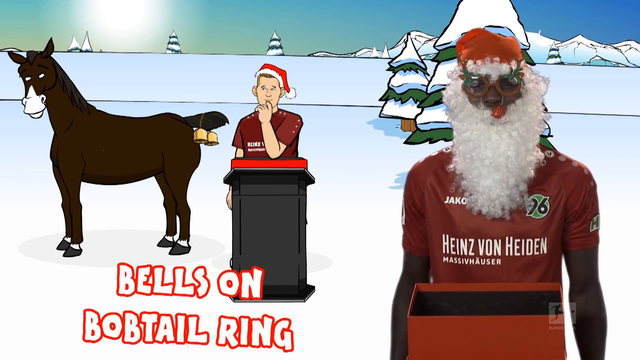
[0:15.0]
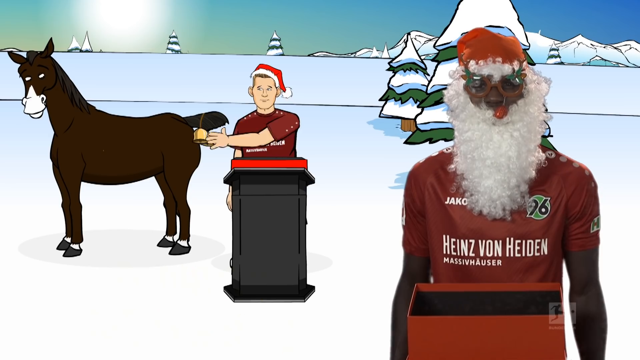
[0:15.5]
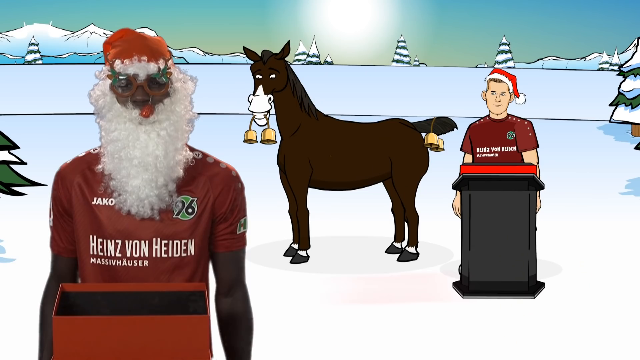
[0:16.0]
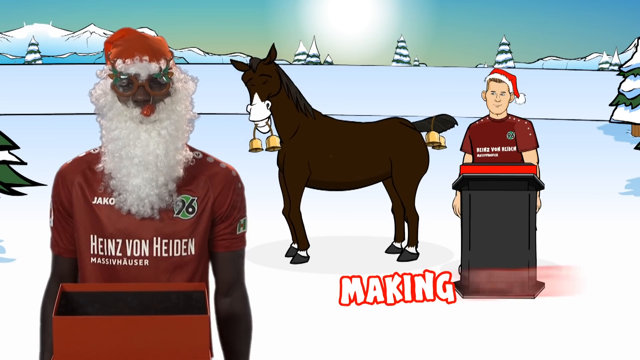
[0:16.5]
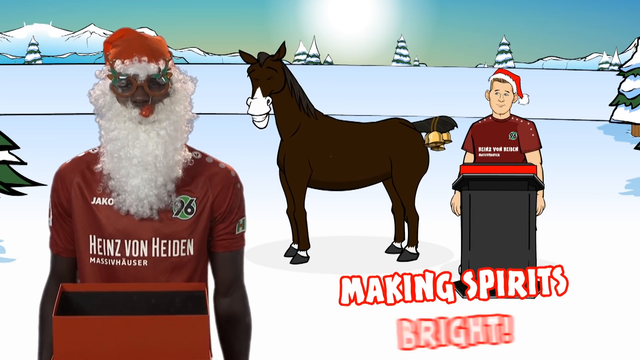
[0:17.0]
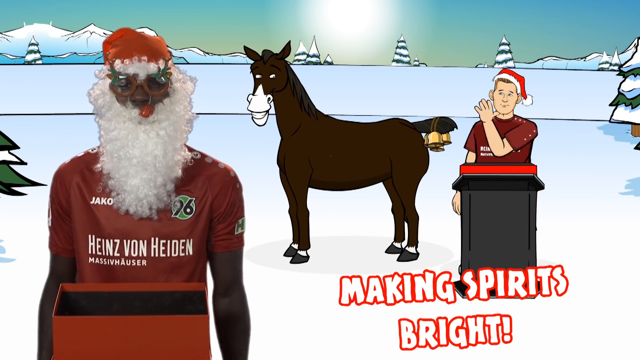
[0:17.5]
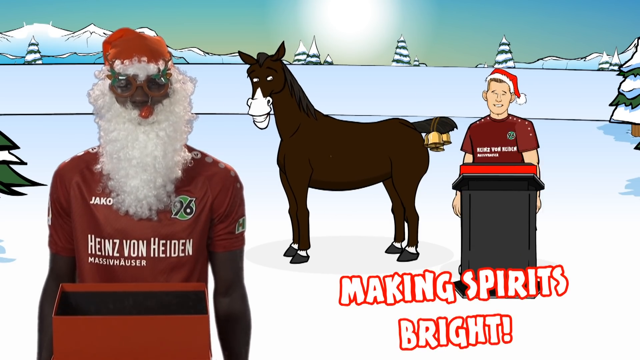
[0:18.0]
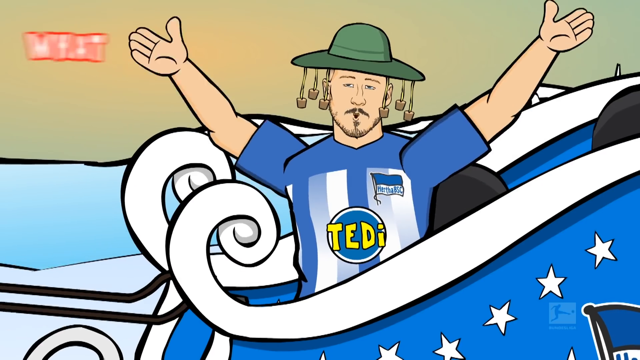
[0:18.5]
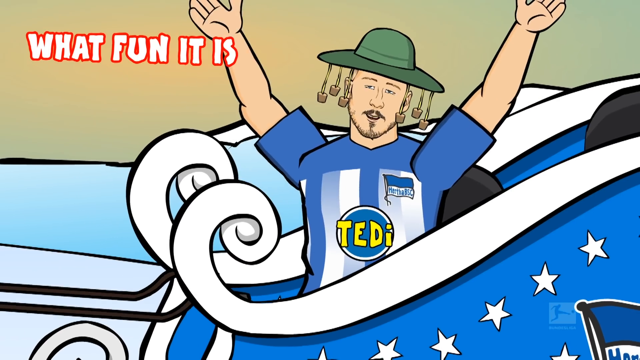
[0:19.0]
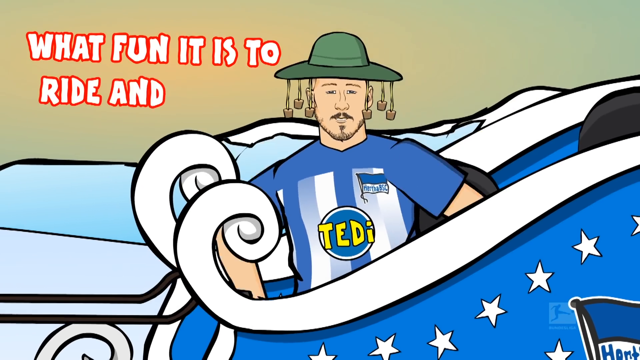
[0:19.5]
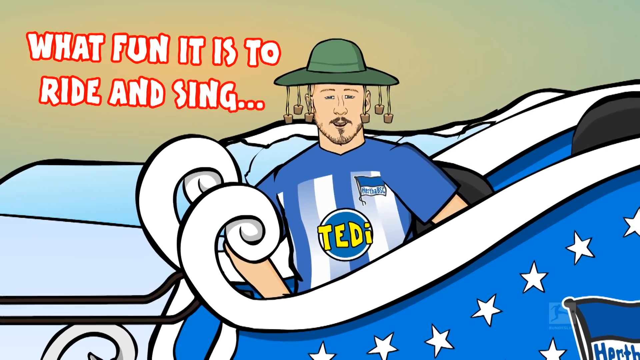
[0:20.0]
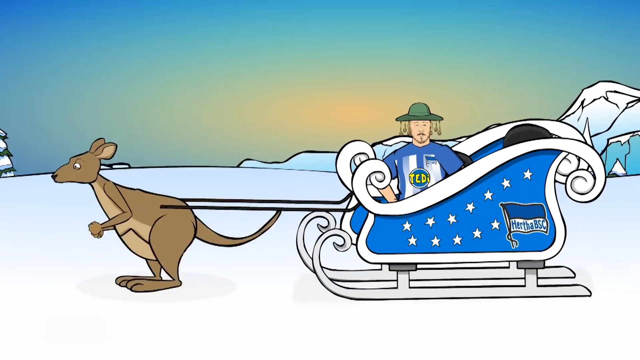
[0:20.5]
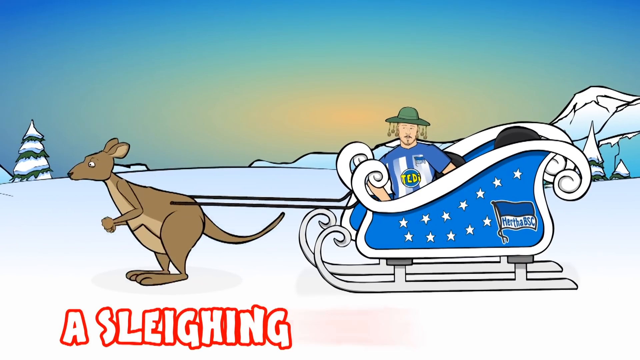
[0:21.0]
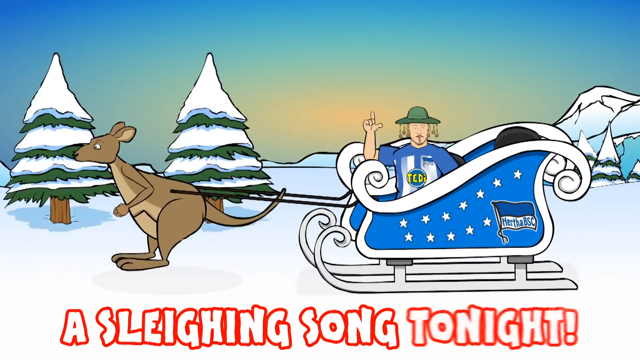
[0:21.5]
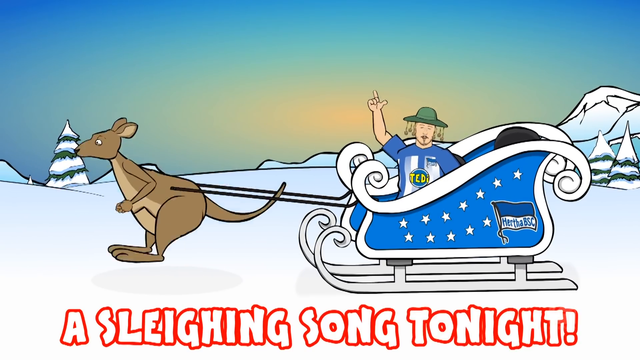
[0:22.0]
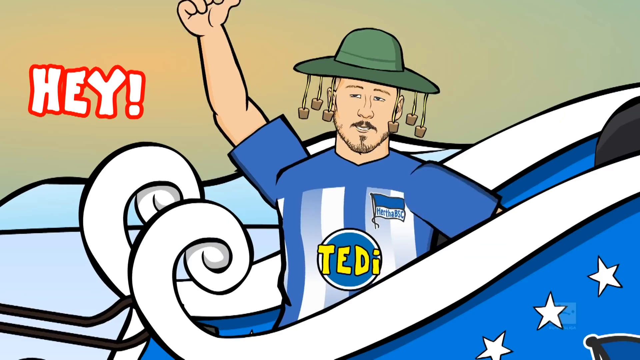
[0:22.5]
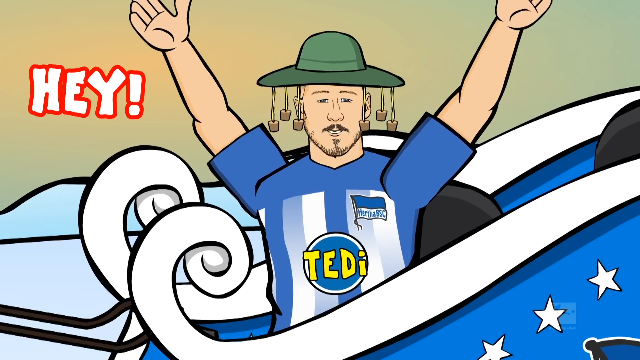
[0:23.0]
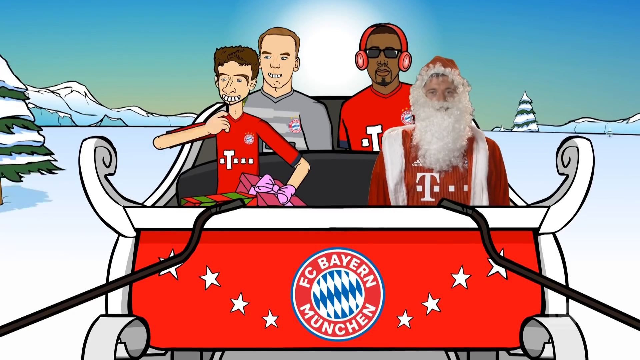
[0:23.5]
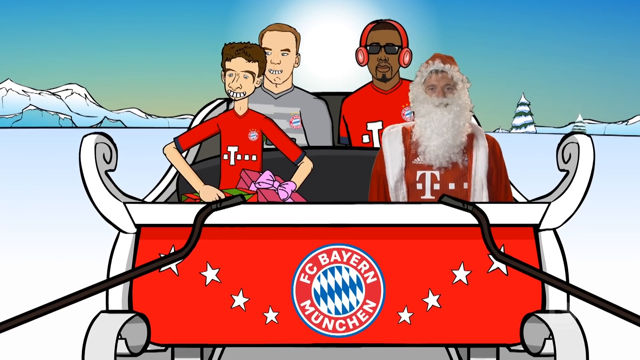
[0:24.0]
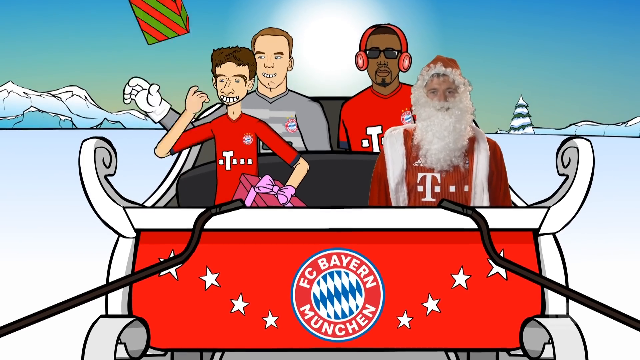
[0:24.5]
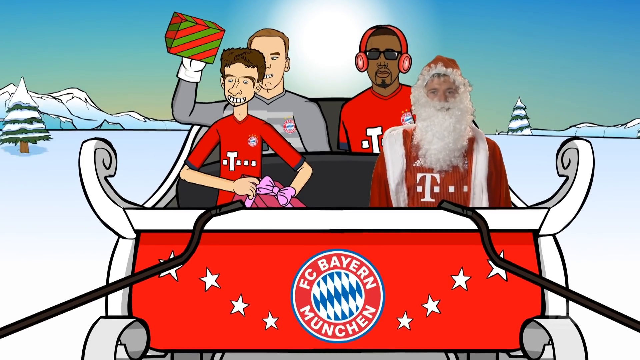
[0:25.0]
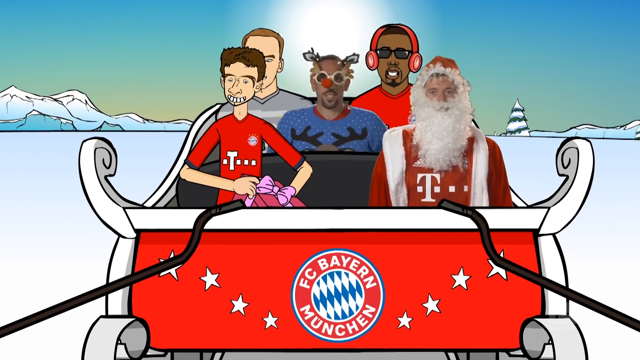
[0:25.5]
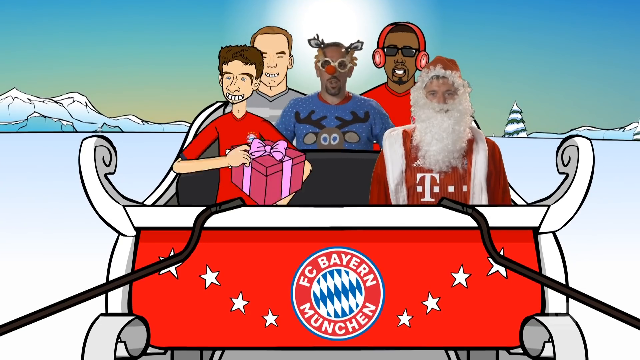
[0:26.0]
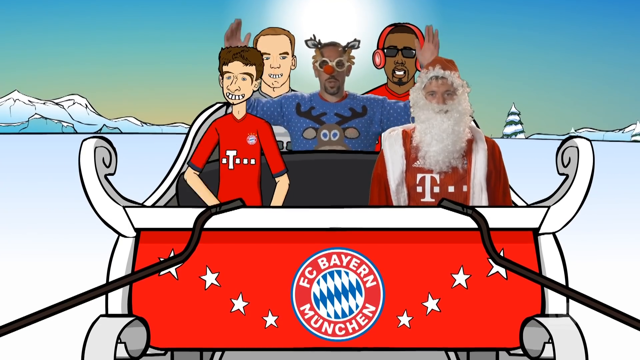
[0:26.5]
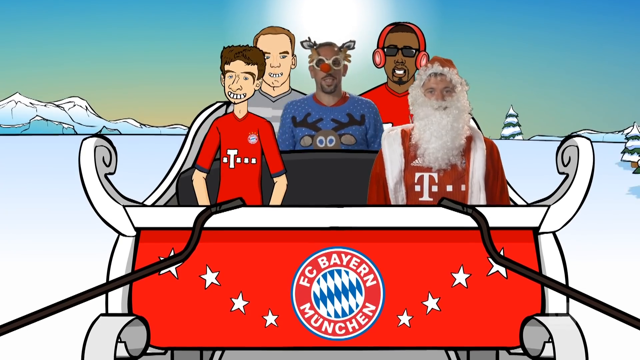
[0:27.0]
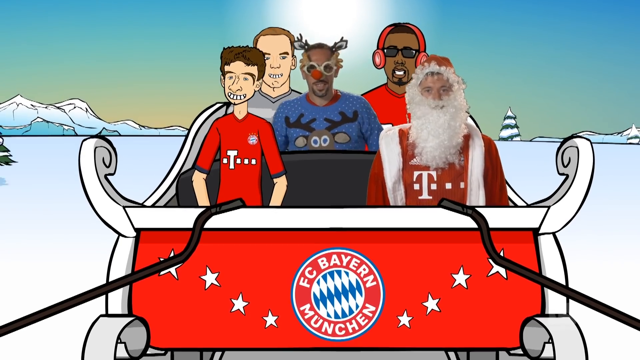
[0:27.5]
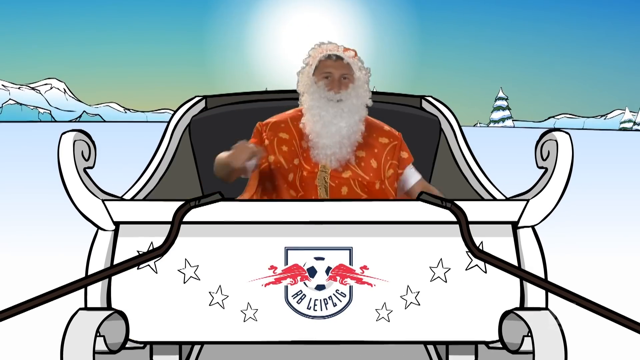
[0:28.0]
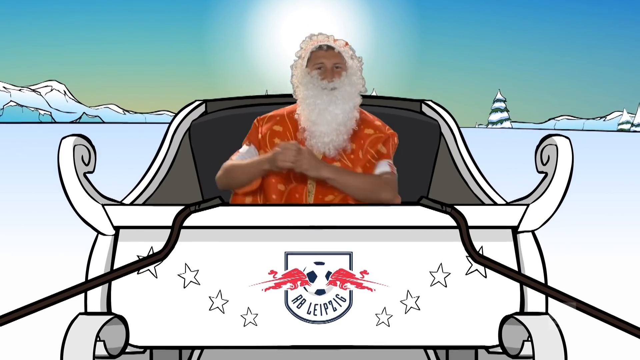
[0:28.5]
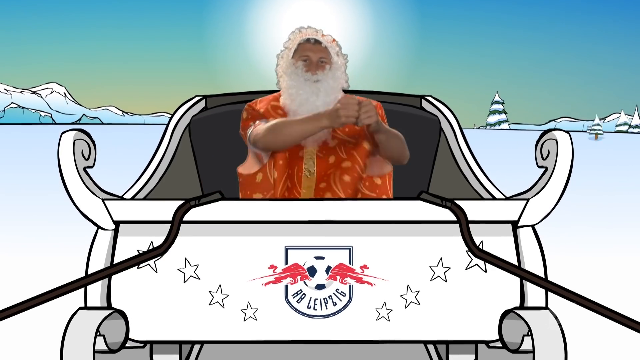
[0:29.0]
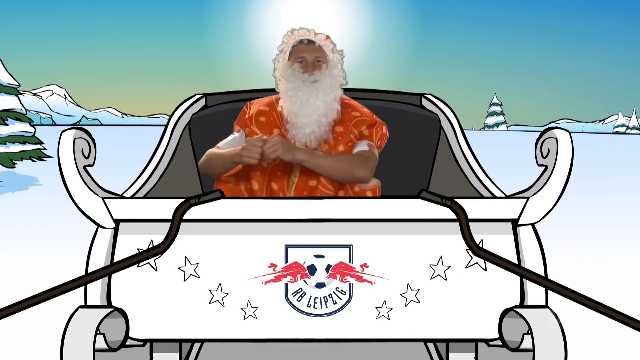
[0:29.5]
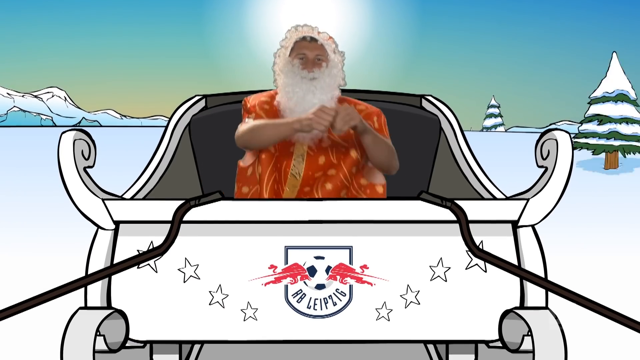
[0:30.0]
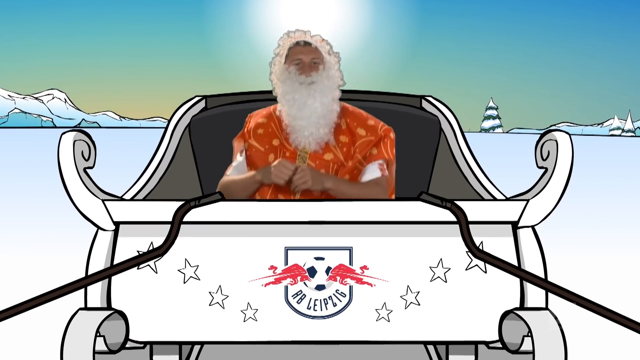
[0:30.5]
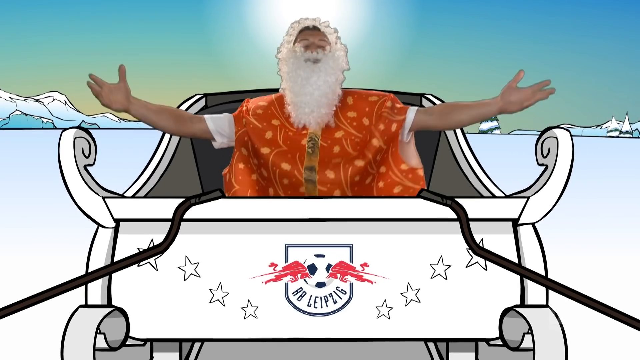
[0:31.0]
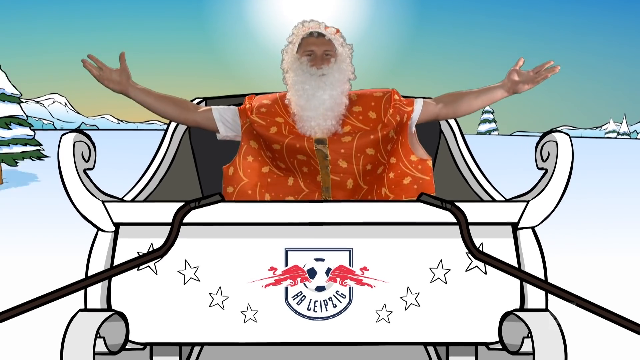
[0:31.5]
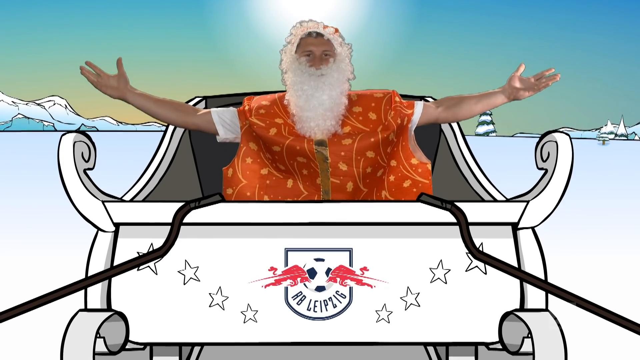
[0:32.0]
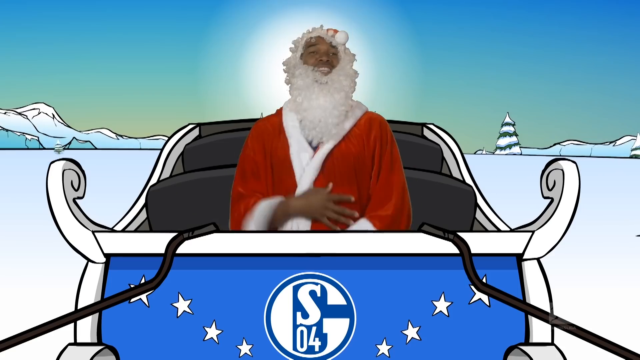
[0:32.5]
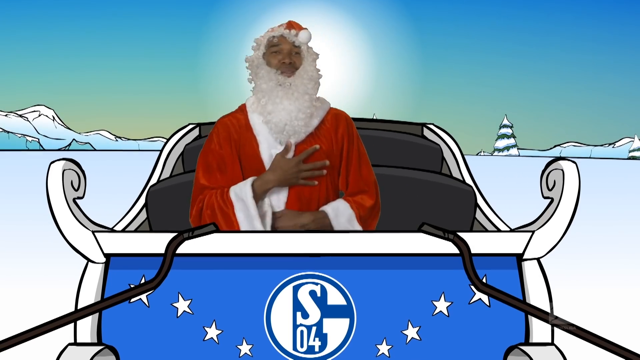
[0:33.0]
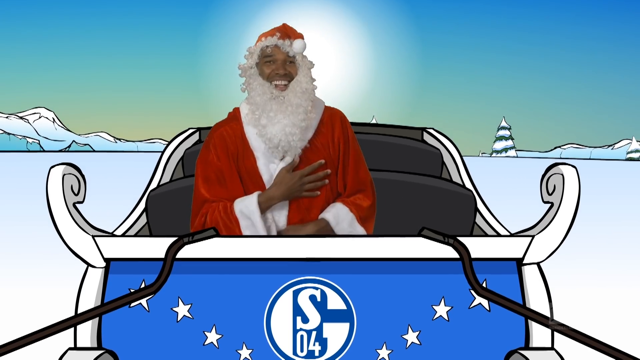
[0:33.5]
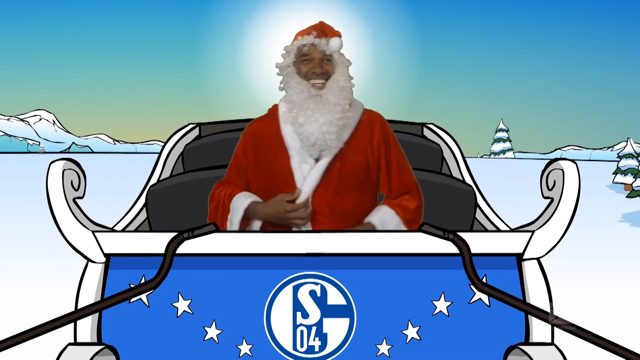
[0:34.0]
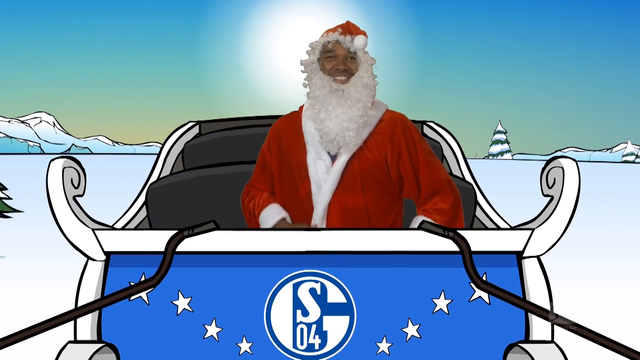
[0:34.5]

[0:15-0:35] The character apparently called Dave is off the mule, which is beside him, and he stands at something like a podium. A Santa impersonator with a beard and hat stands in front of the camera, and the text "Hans Von Heiden" appears. There are bells on the mule's tail, and the screen reads "Making spirits bright". The camera pans to a man in a blue sleigh wearing a green hat with what look like dreidels on it; he has his arms up in the air, and yellow lettering on his shirt reads "TEDi". He sings "What fun it is to ride and sing a sleigh song tonight", with the words on screen. The camera pulls back a little to show that his sleigh is pulled by a kangaroo. It then pans to a red sleigh with a real Santa impersonator in front and three animated characters in the sleigh with him, apparently meant to be celebrities. A man with very buck teeth sitting next to him throws presents out of the sleigh, and the man behind him catches them. Another figure, possibly a singer, with red headphones and black sunglasses, sits behind Santa. A real, non-animated man pops out between them, wearing a blue sweater with a reindeer on it and glasses with reindeer antlers and a red nose. The camera pans to a real person in a white animated sled doing the Cabbage Patch dance; he wears a beard and hat and then puts his arms out wide. It pans to a blue sled with another Santa impersonator in a red Santa jacket and hat, who smiles and is possibly lip syncing.